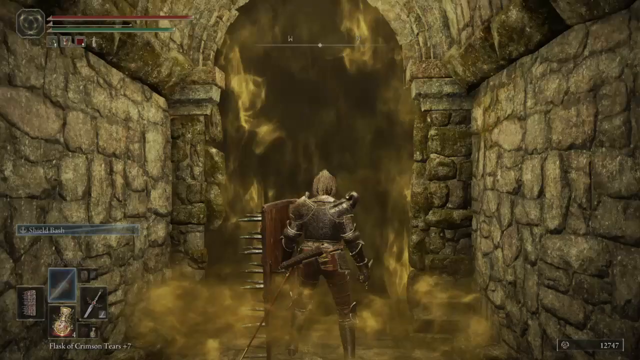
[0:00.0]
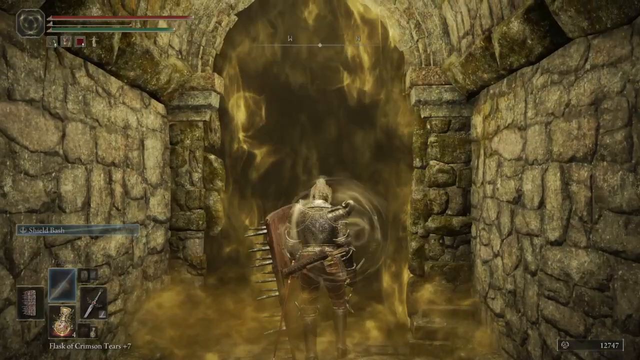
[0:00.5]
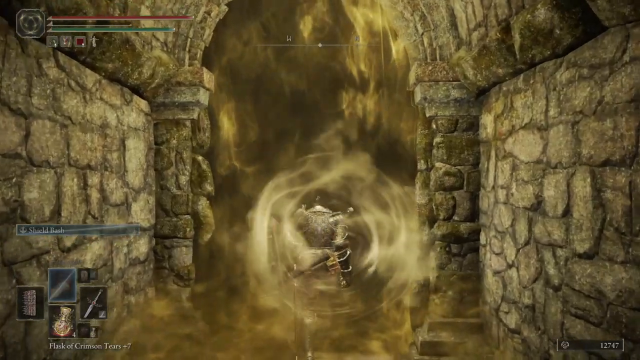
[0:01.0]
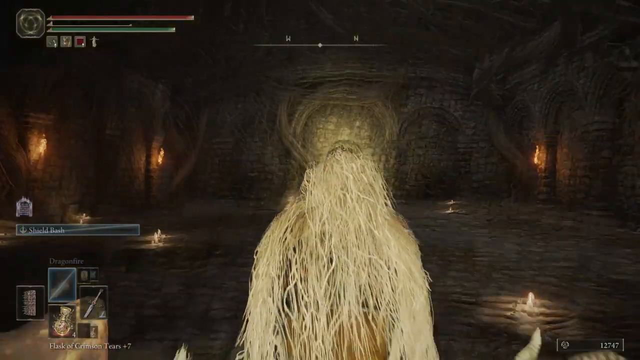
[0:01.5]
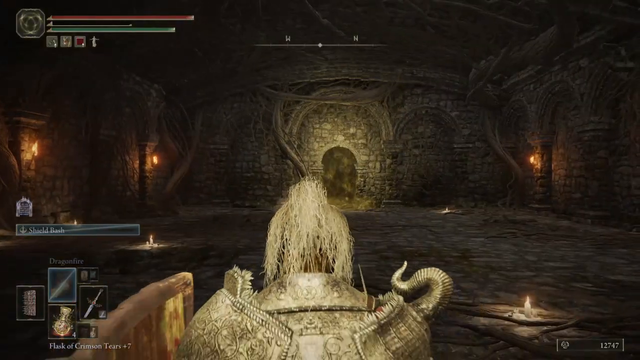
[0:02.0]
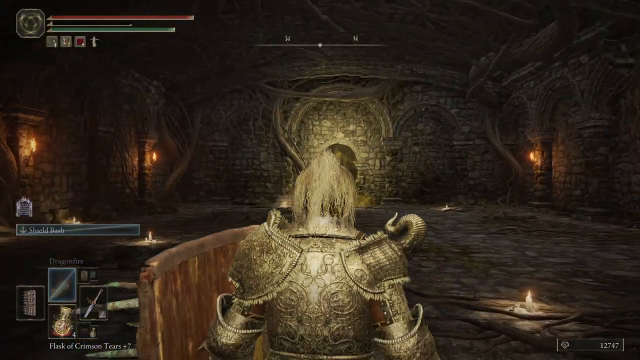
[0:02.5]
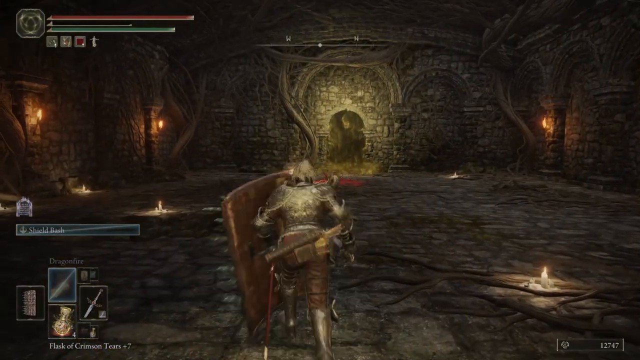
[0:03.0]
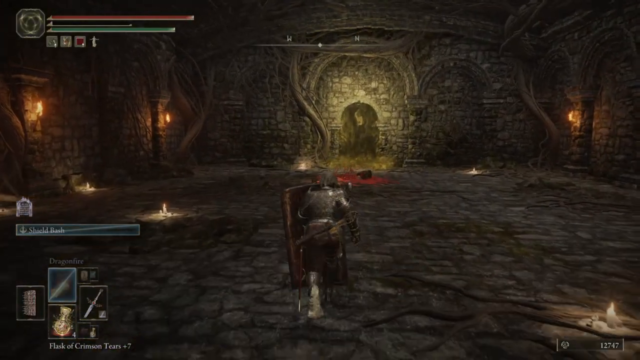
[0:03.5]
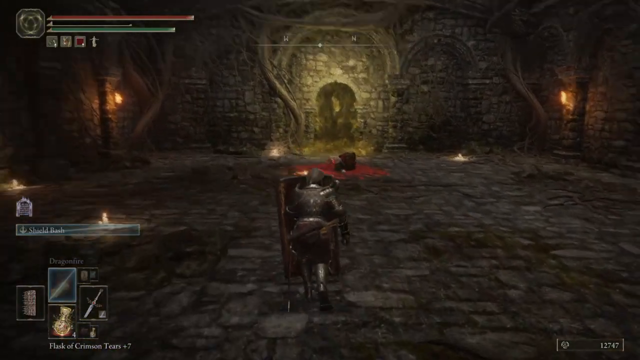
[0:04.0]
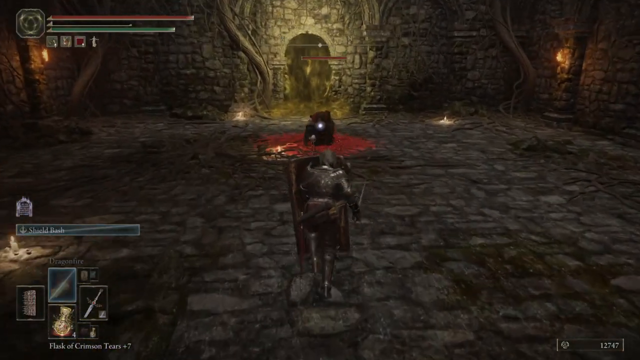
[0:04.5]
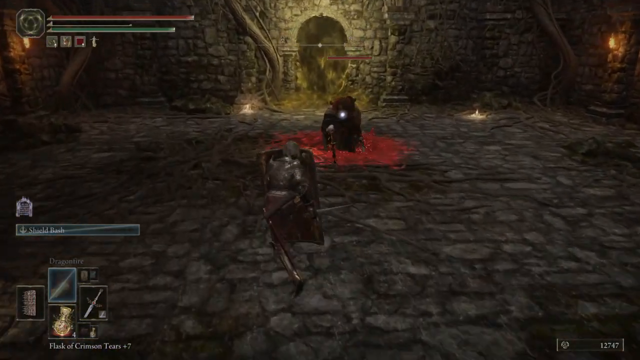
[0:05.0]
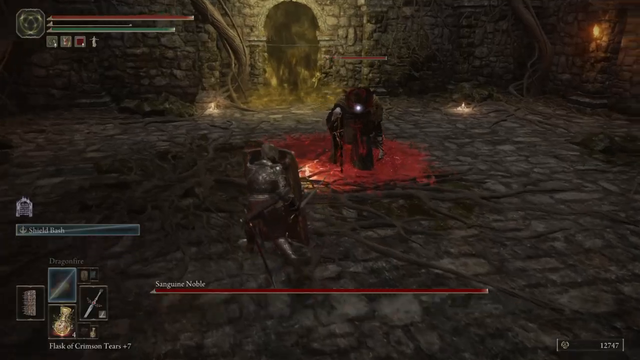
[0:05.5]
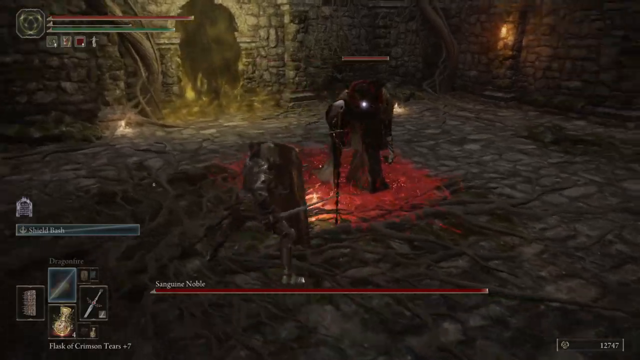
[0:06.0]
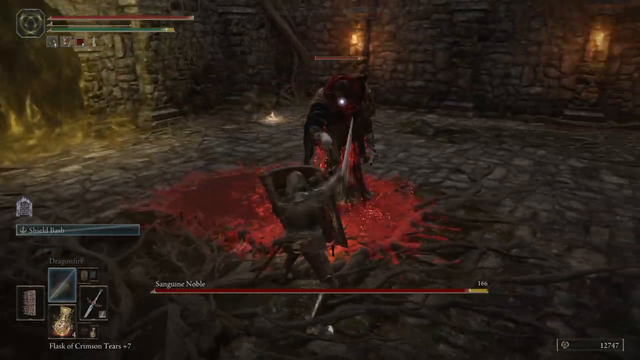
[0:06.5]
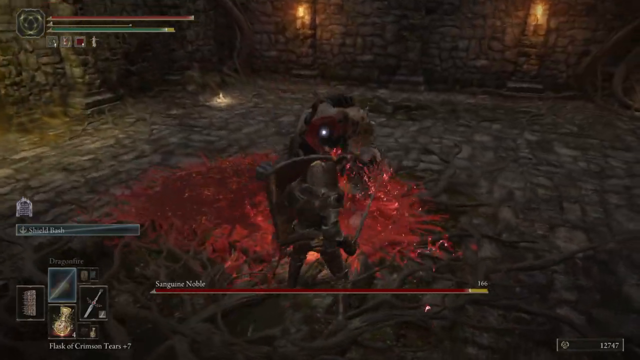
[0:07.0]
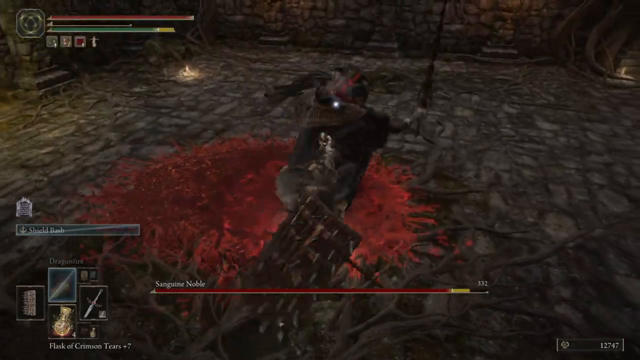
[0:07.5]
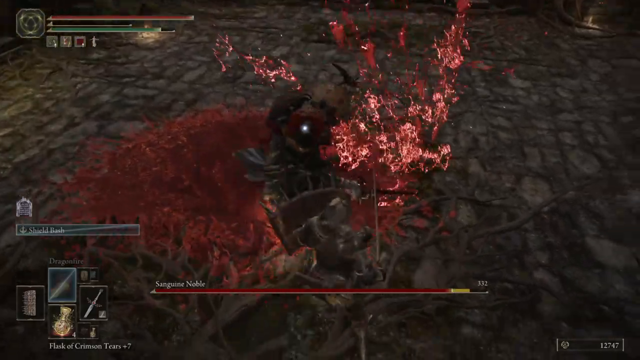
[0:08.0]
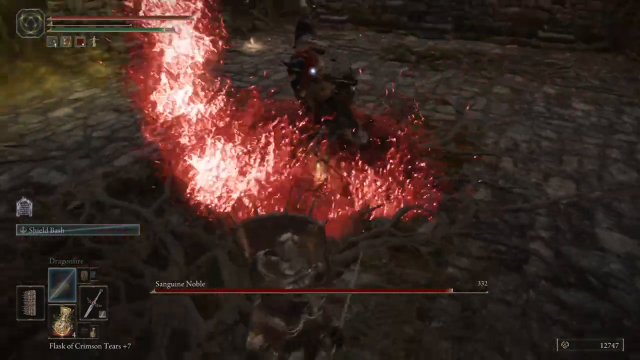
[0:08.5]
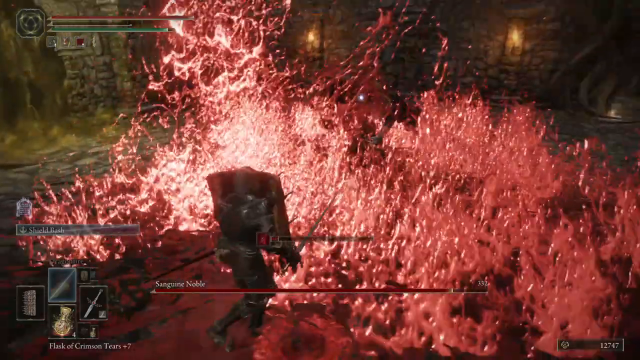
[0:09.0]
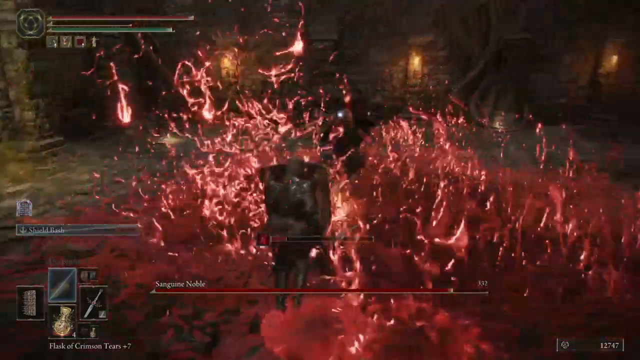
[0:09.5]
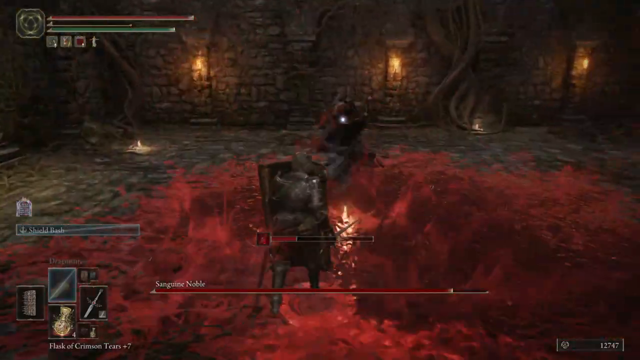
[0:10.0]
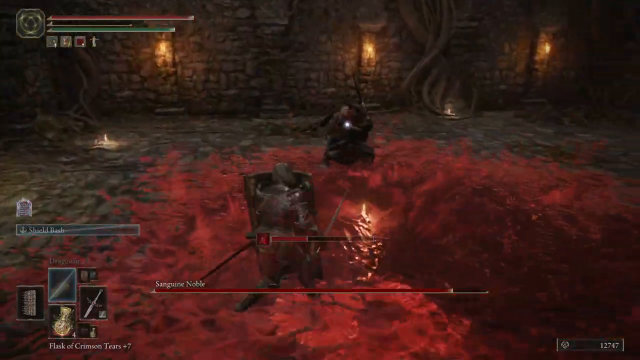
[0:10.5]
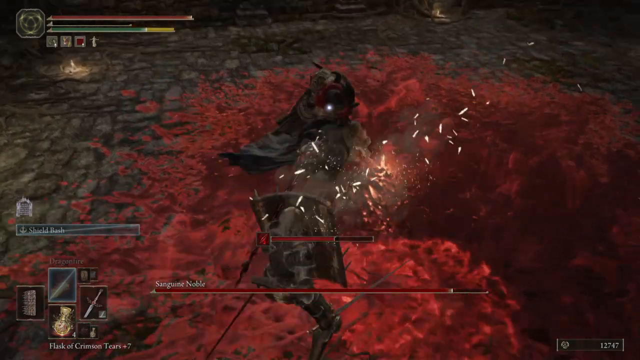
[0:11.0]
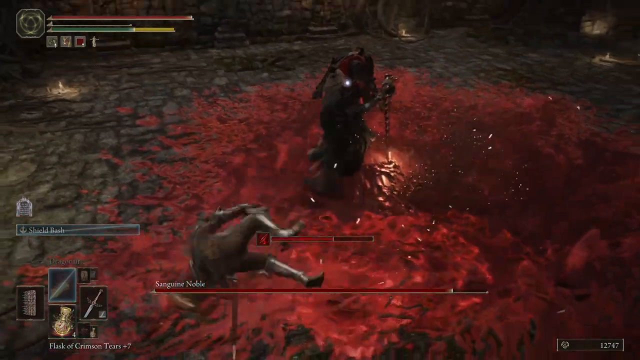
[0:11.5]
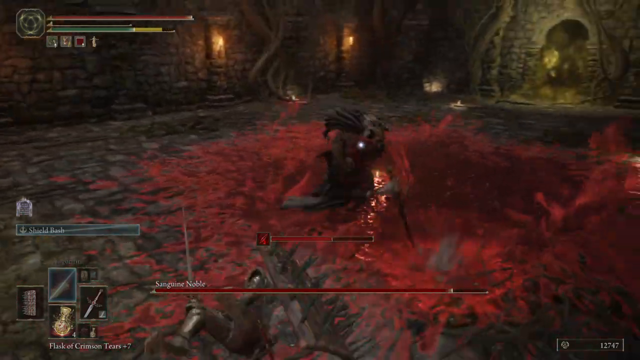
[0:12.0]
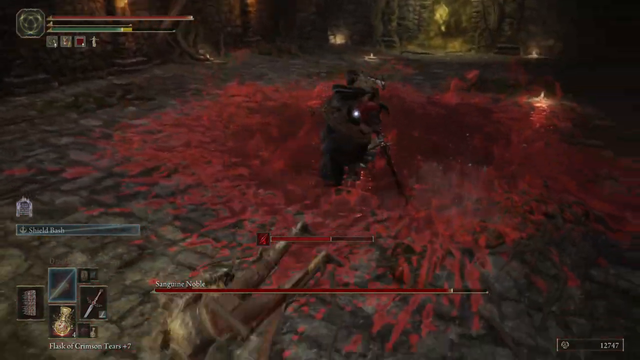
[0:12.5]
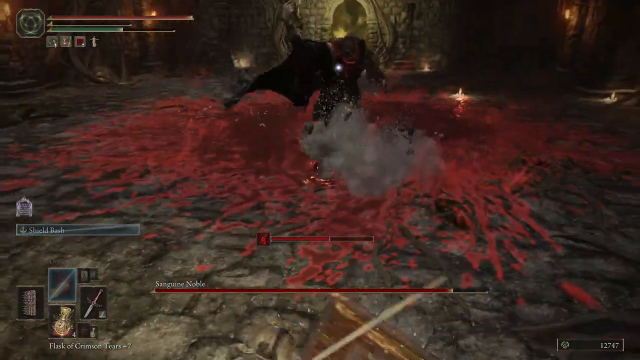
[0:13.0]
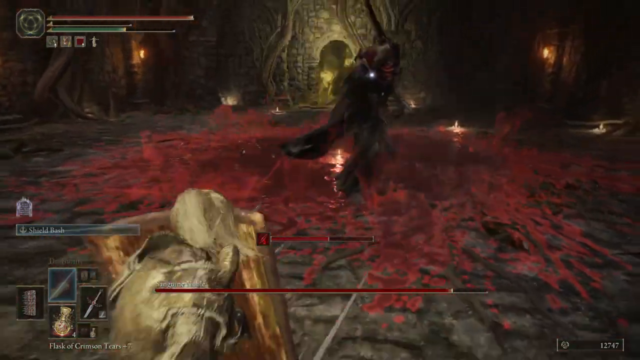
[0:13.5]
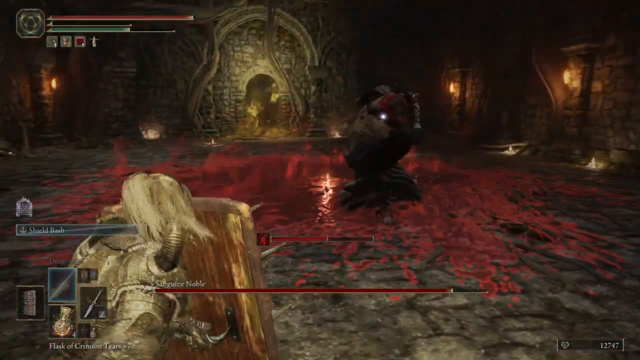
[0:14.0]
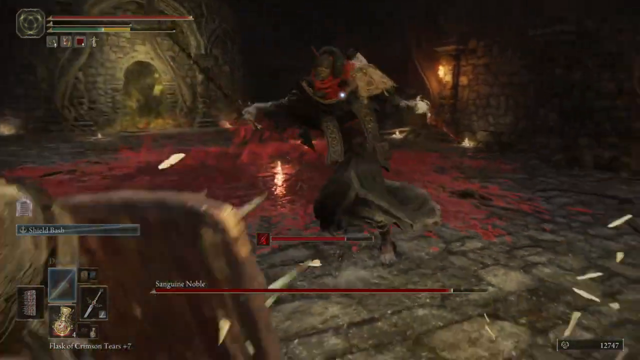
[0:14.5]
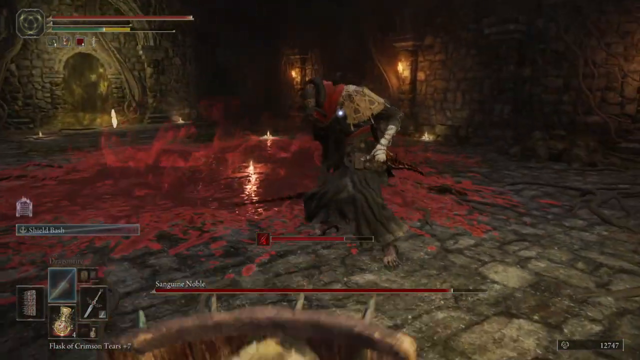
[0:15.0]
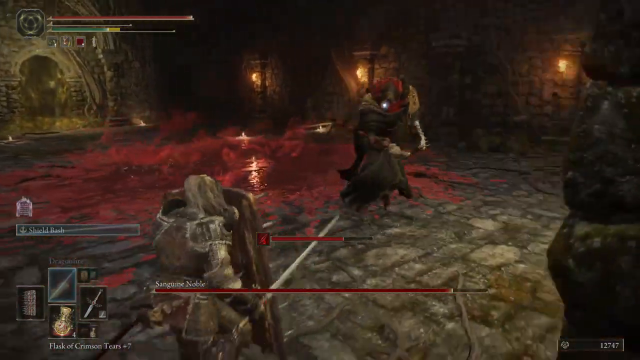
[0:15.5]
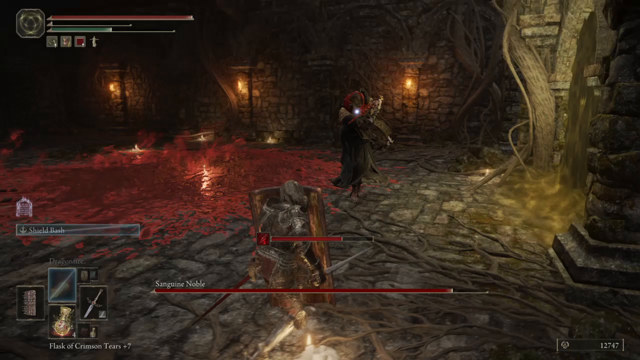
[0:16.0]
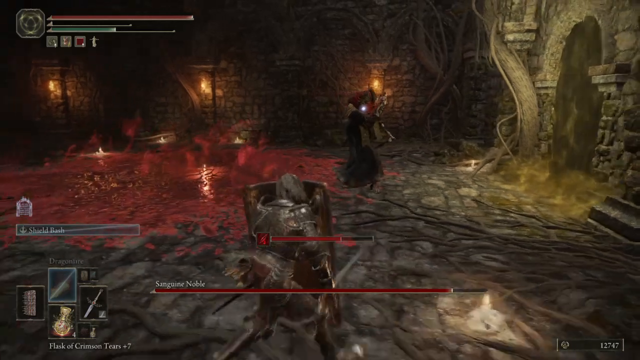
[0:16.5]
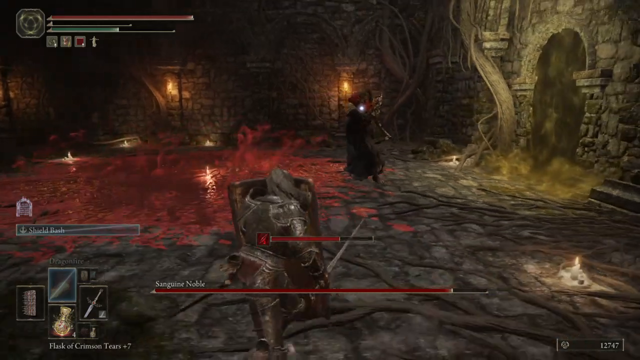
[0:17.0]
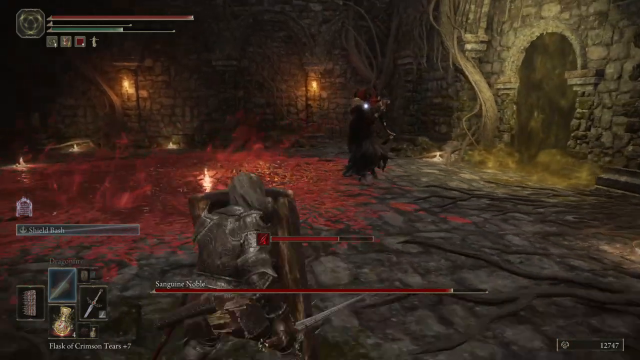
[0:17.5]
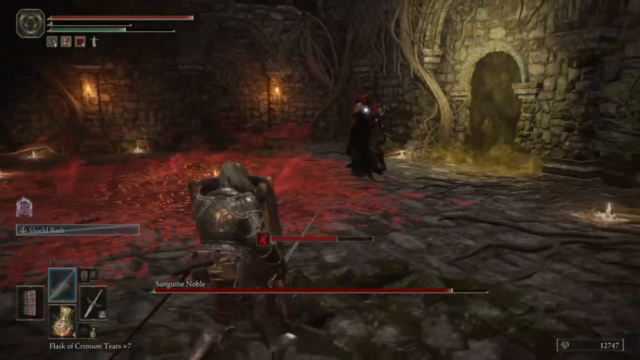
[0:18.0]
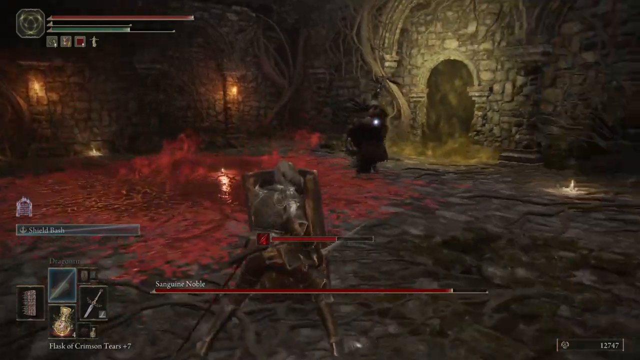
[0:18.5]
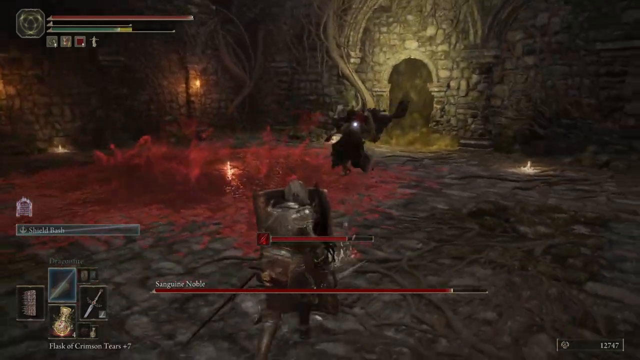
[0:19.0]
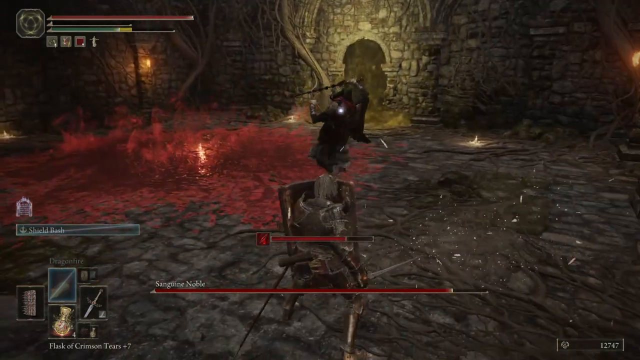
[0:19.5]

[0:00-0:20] In a video game, one subject is in what looks like a castle setting whose walls are made of very large stones. The main subject looks like a male wearing armor like traditional knight armor. He walks through a gate that is almost like a portal. A second subject, which seems to be some sort of monster, comes up from the ground out of a pool of blood. The monster is very dark looking and hard to get a good look at, and it starts attacking the main character, who fights it.